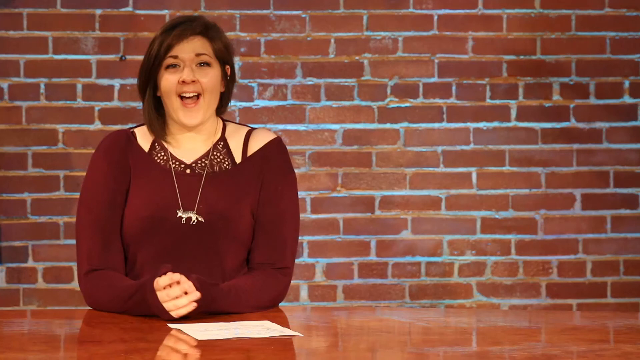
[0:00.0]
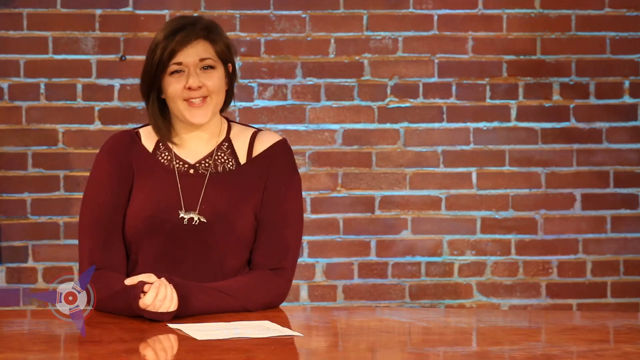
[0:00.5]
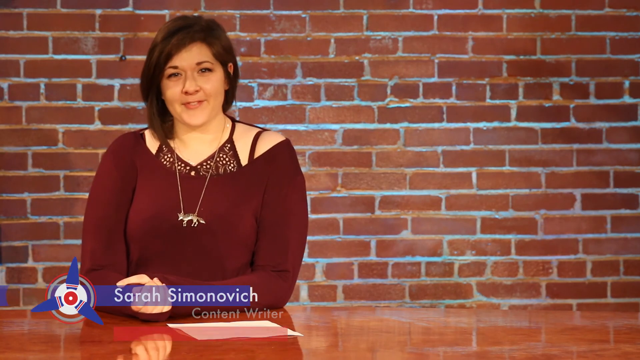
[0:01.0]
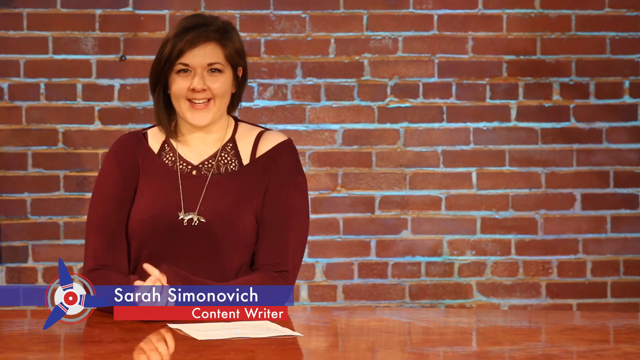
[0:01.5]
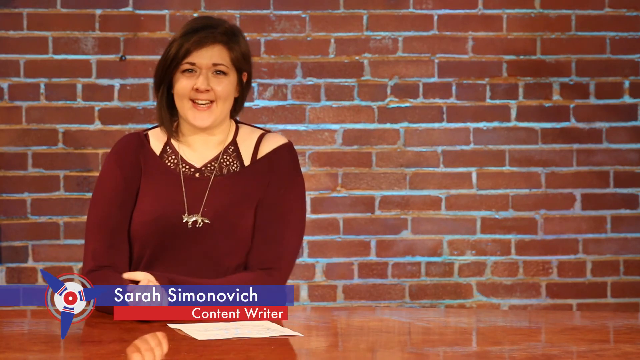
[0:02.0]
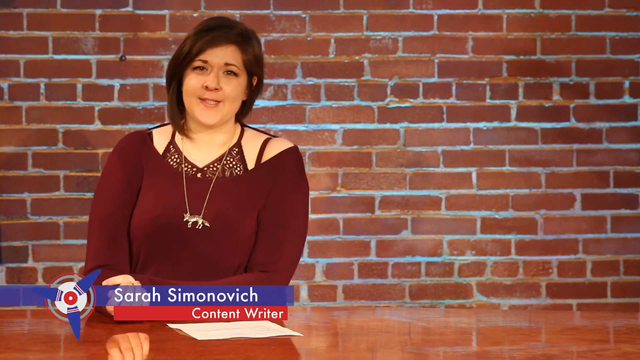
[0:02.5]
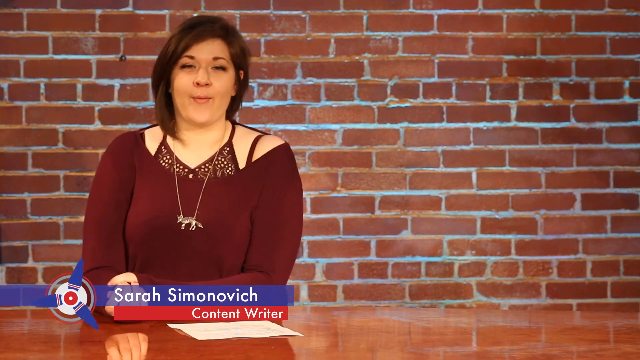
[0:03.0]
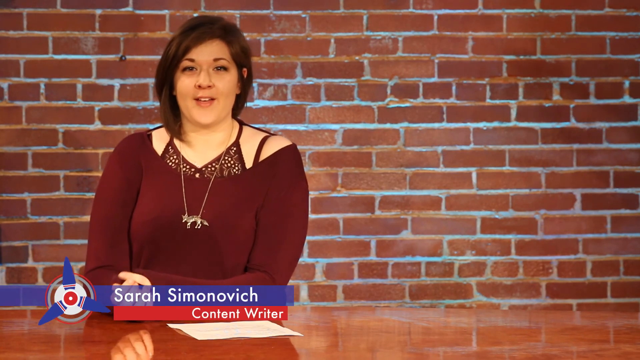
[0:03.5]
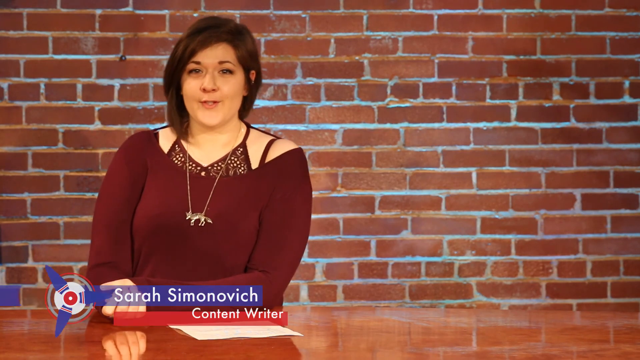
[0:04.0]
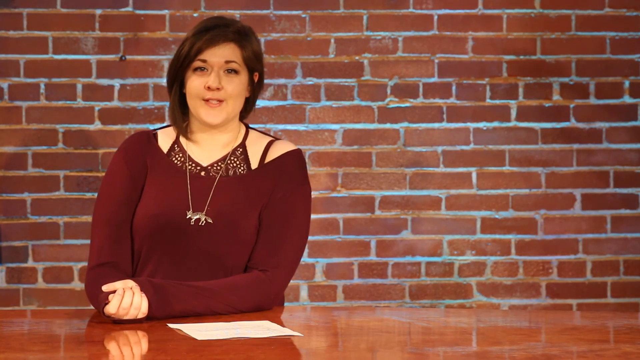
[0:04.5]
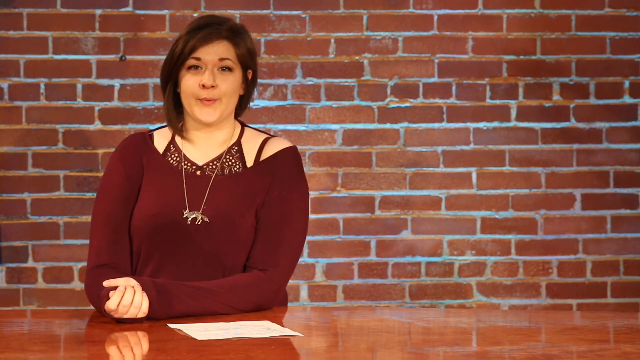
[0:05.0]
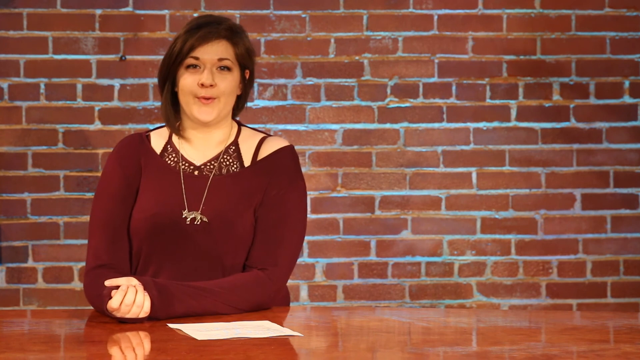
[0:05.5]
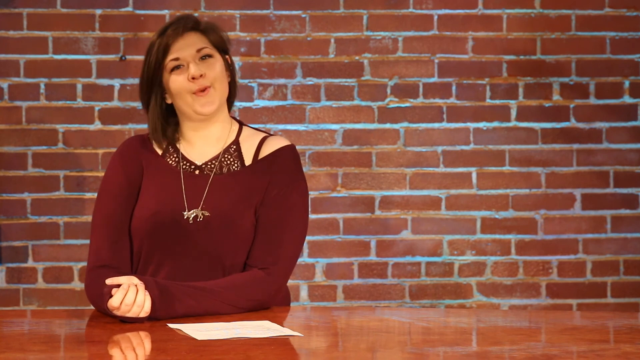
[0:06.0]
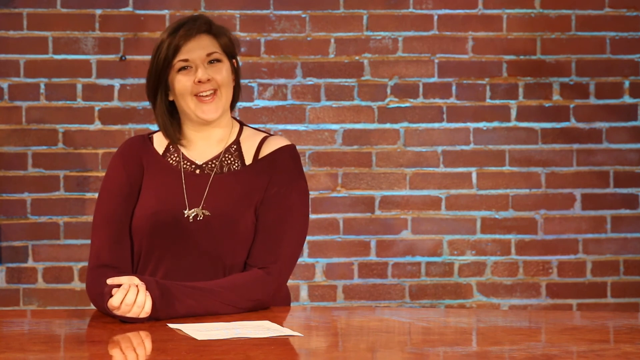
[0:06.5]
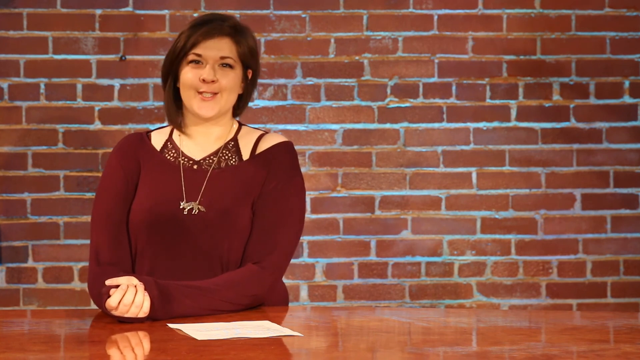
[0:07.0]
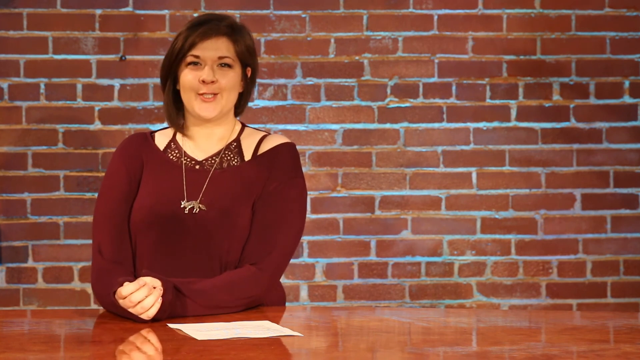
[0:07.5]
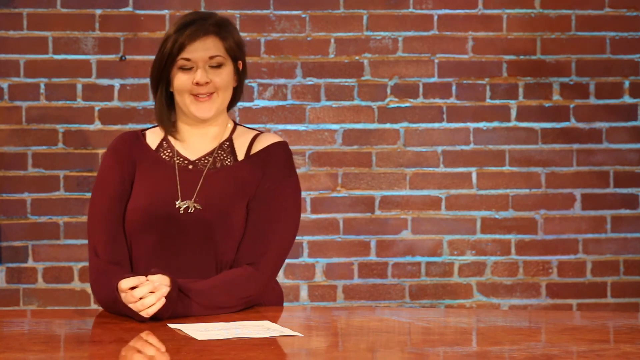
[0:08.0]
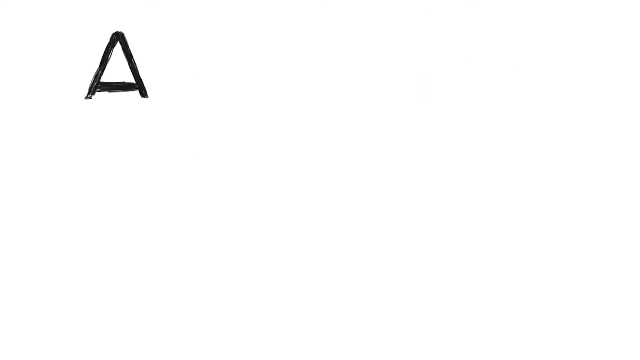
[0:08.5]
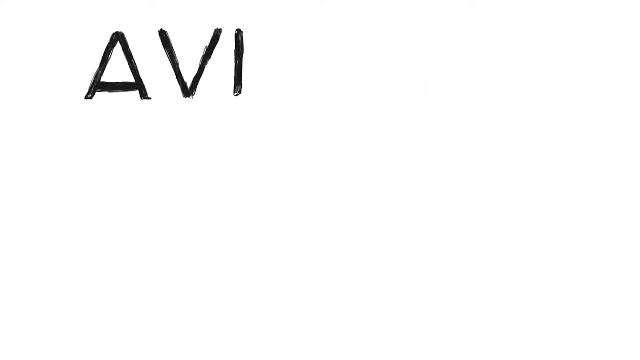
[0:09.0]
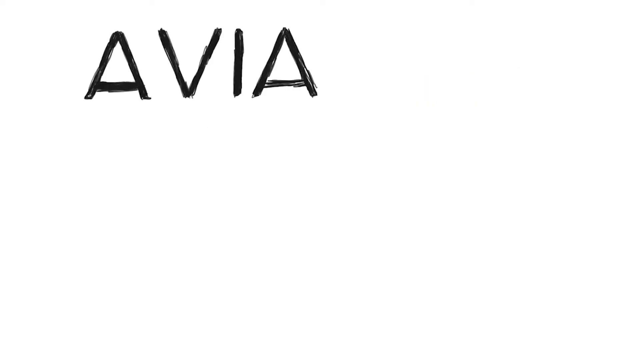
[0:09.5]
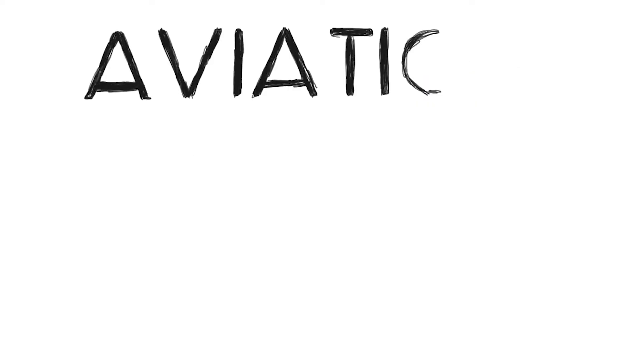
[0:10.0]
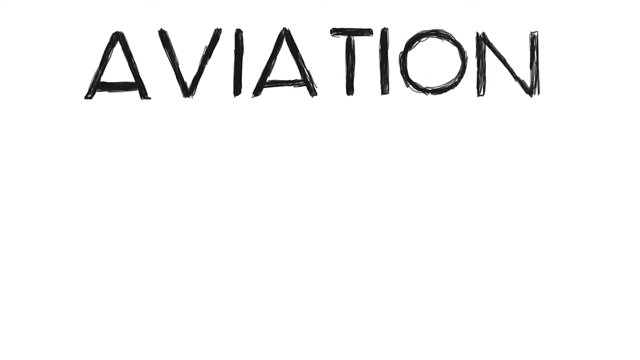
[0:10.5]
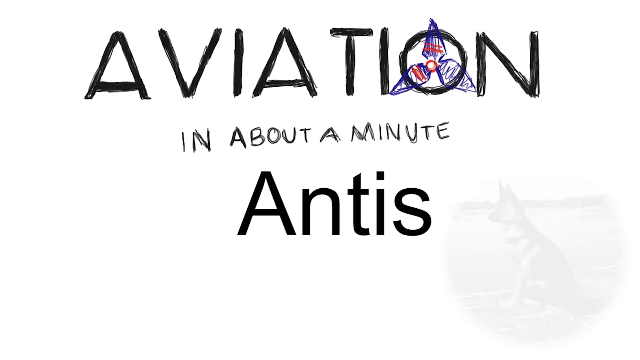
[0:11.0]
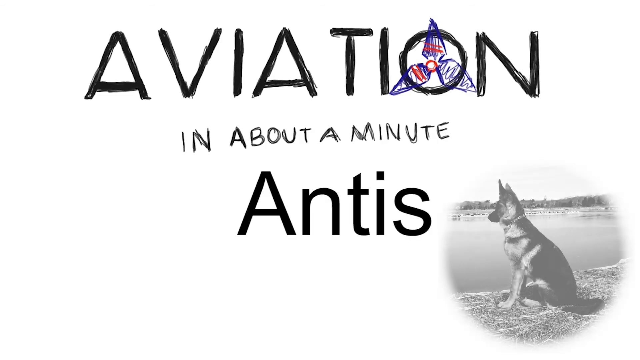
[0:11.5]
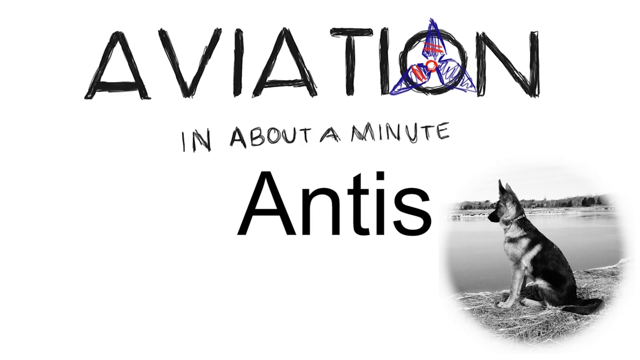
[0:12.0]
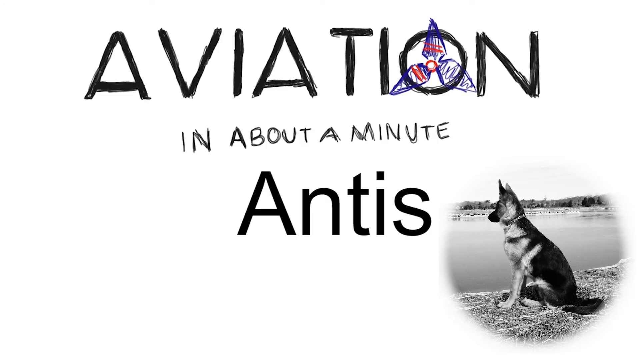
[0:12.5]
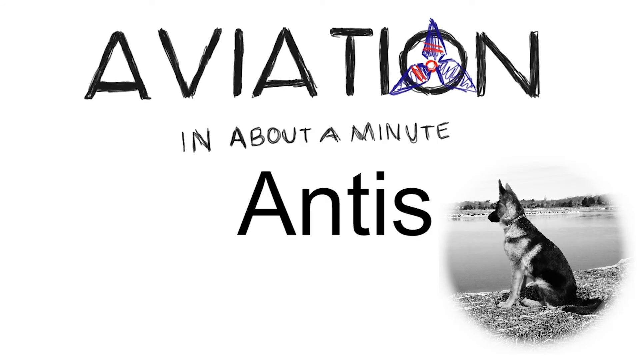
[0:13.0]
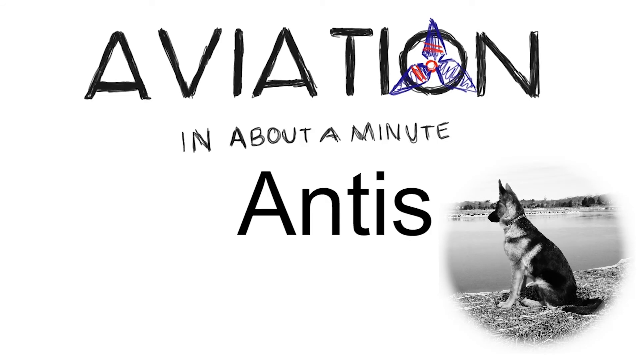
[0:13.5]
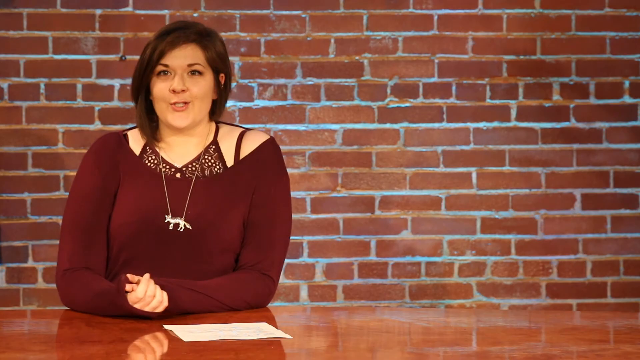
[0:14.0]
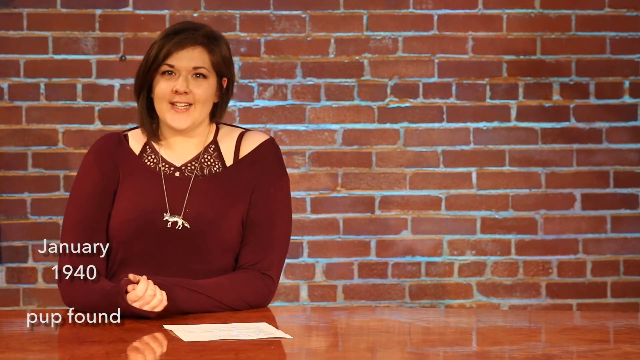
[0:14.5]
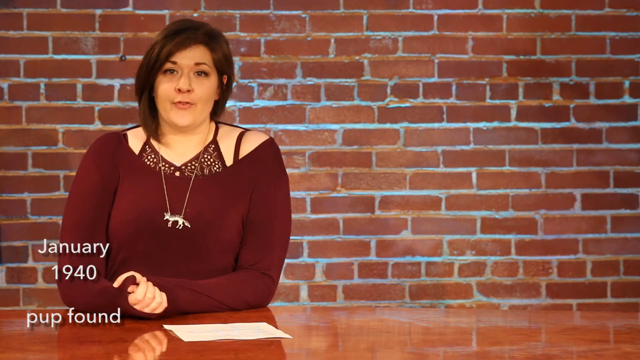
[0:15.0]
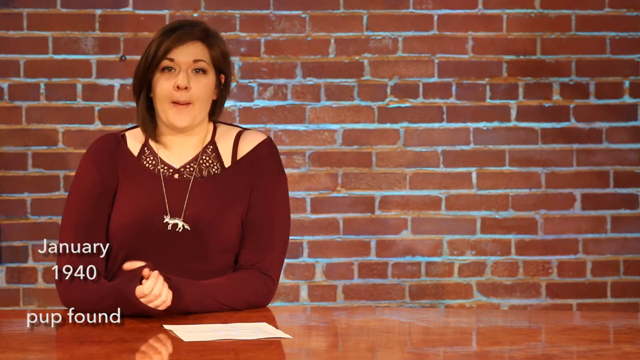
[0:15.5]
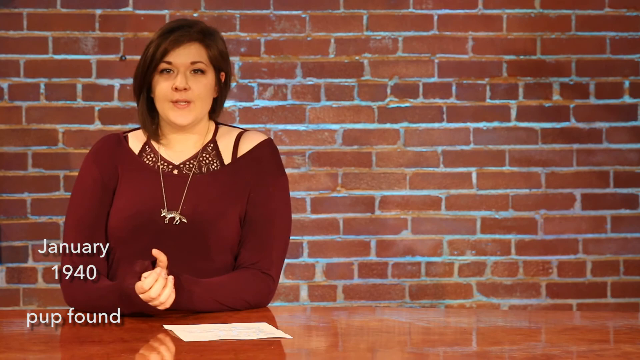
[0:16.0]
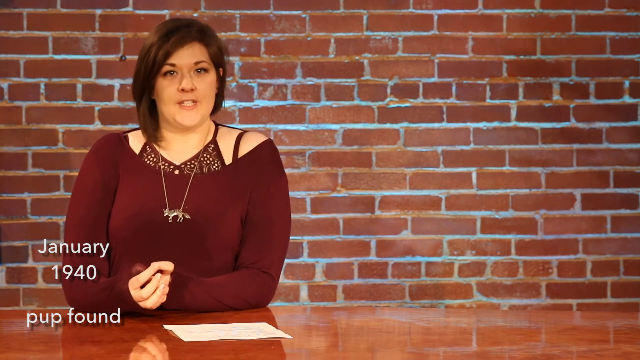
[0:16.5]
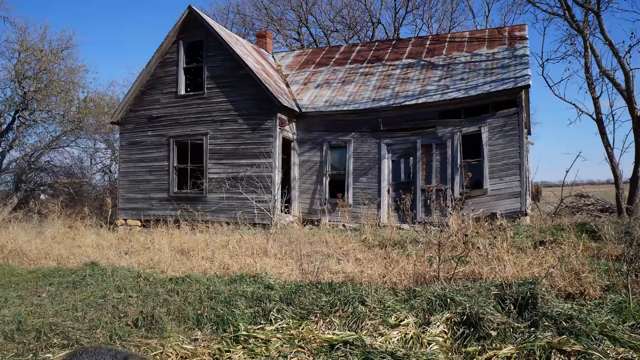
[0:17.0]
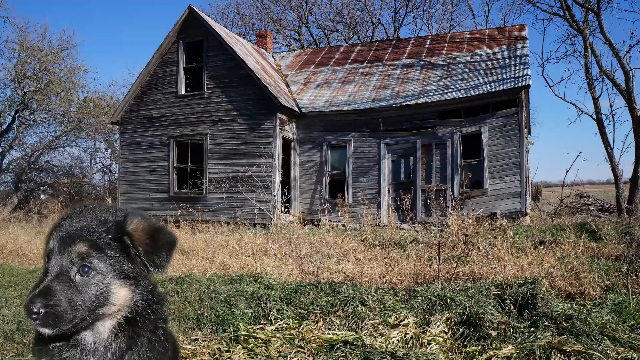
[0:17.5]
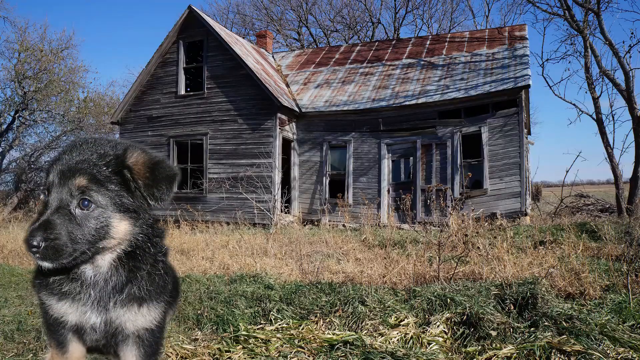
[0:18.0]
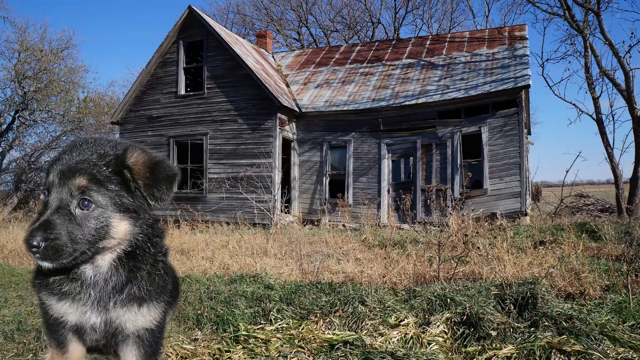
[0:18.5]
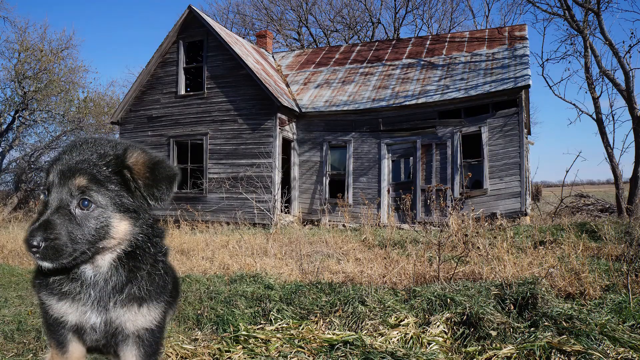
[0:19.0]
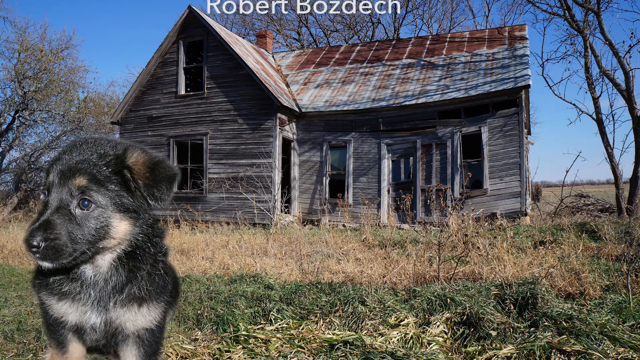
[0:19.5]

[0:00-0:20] A woman wearing a burgundy shirt with a couple of straps at the top and a fox necklace stands in front of a brick wall, clasping her hands together and kind of talking. Her name is Sarah Simonovich, and she is a content writer. A paper is down in front of her that says "aviation" in all capital letters, with "in about a minute" in a smaller font, also in all capital letters. It also says "January 1940." The table is so shiny that the reflection of her hands can be seen on it. On the left side of the screen she shows a puppy, probably her puppy, in black and white. The text "Antis," with a capital A and the rest lowercase, might be the dog's name; it is next to a picture of a German shepherd dog looking off to the left. The text "pup found" appears. Two names, Pierre Duval and Robert Bowes Deck, pop up on the screen in front of a broken-down house, with the pup off on the left.